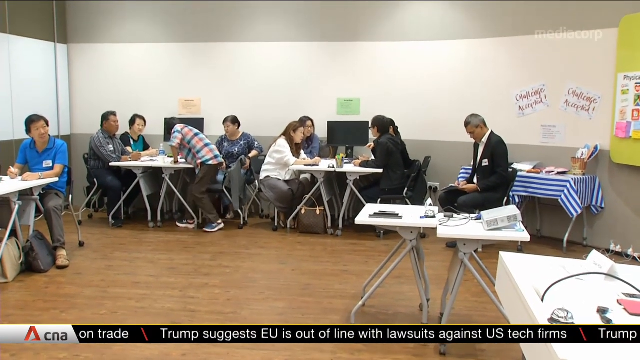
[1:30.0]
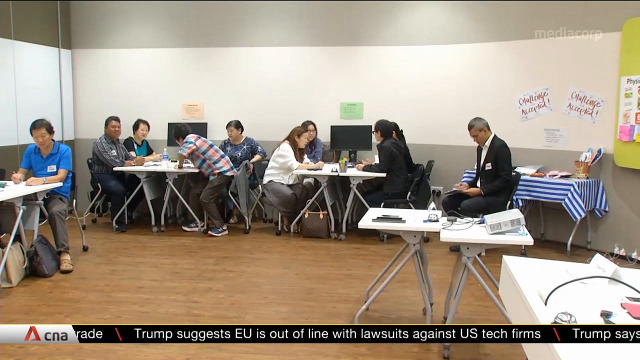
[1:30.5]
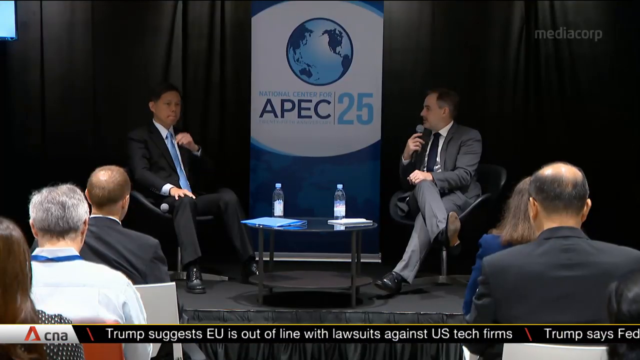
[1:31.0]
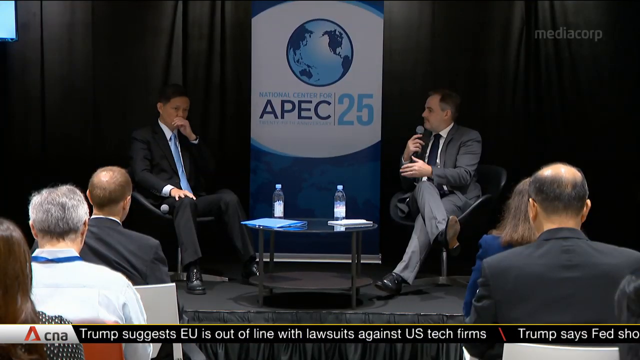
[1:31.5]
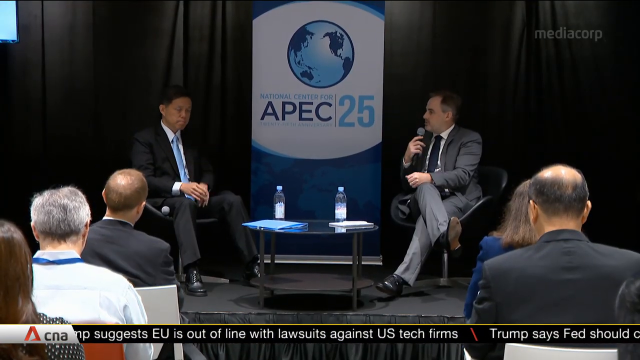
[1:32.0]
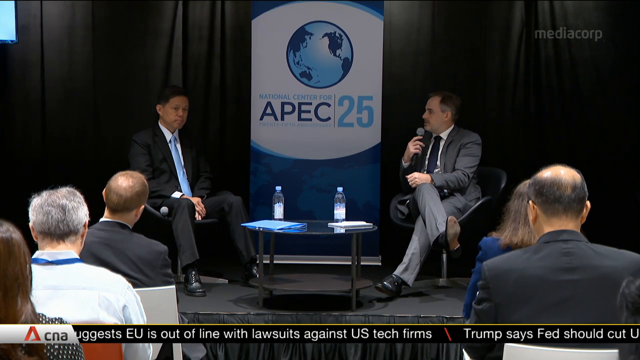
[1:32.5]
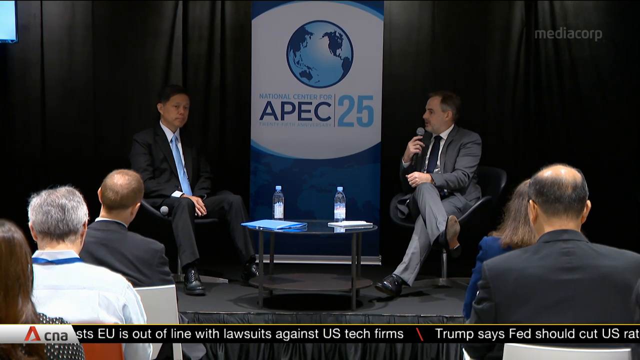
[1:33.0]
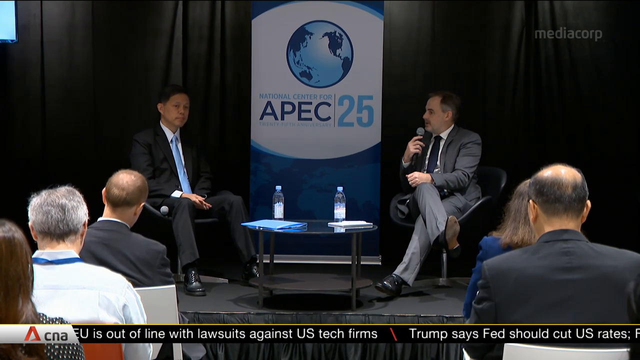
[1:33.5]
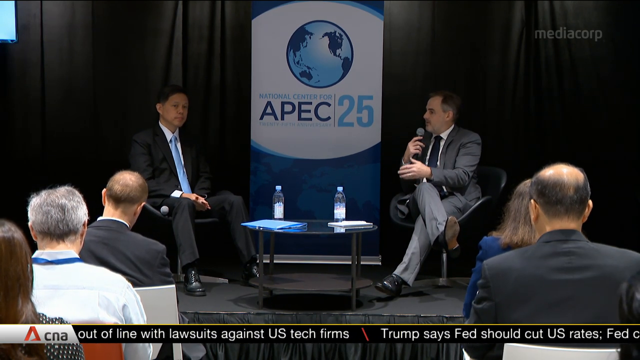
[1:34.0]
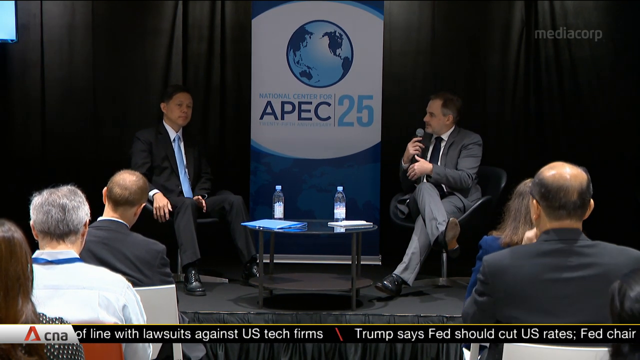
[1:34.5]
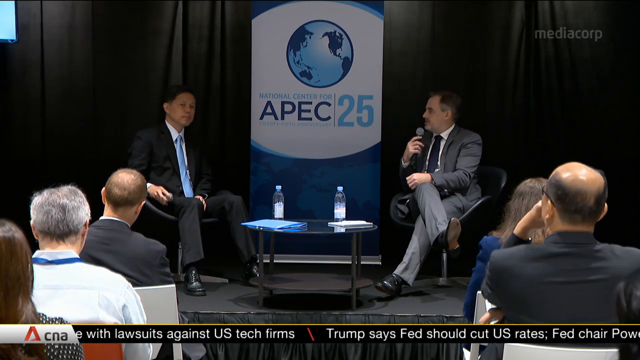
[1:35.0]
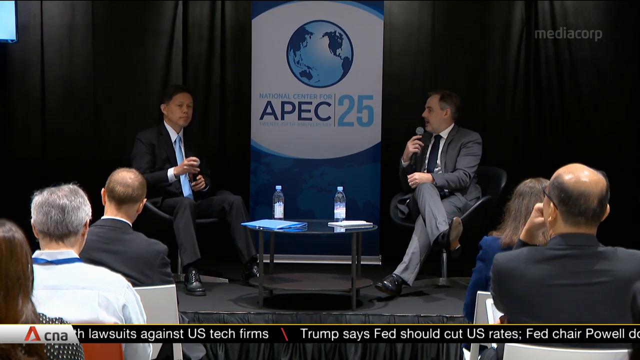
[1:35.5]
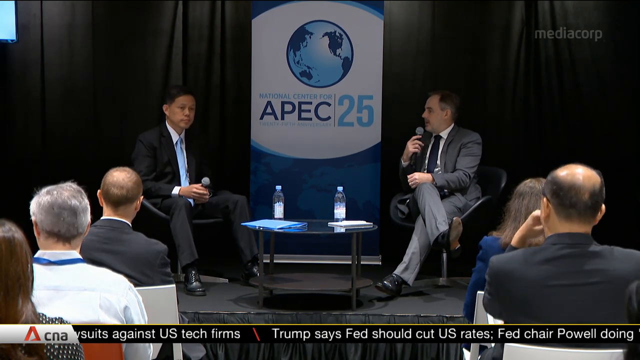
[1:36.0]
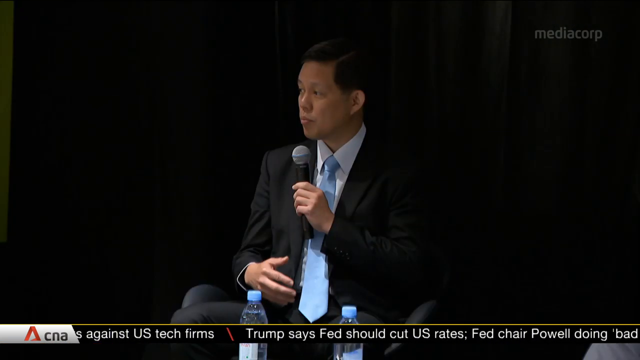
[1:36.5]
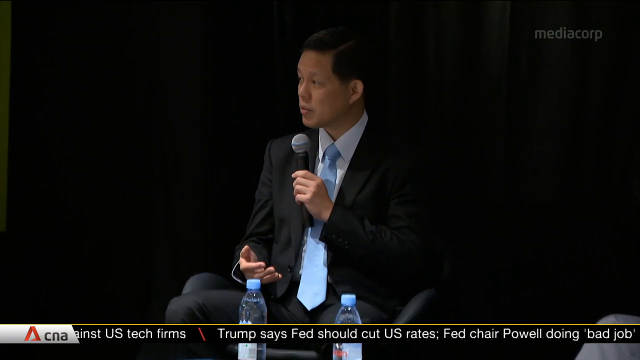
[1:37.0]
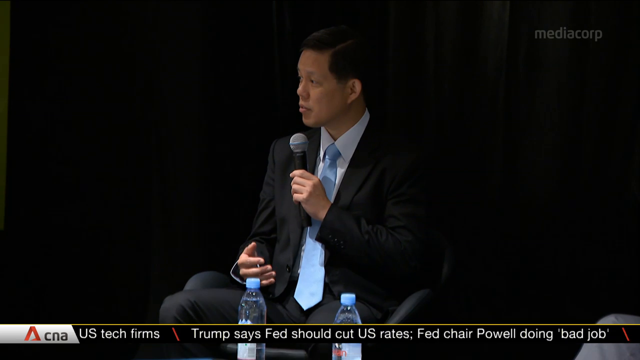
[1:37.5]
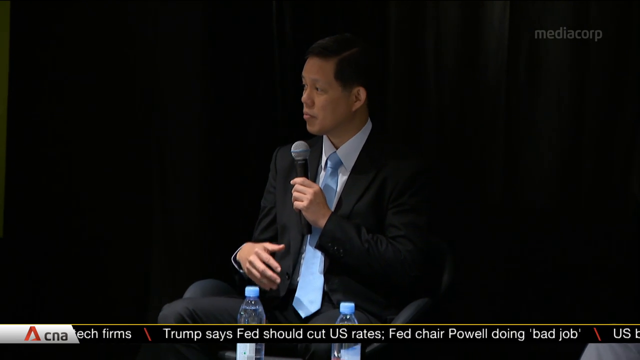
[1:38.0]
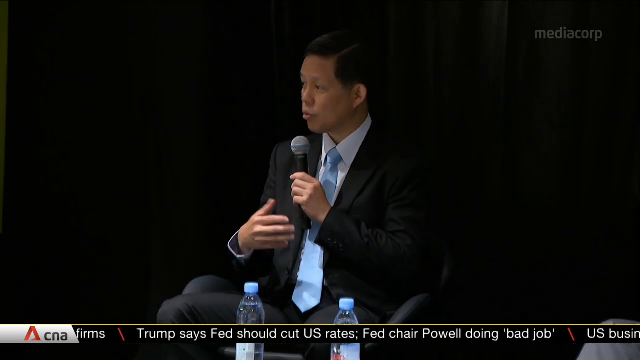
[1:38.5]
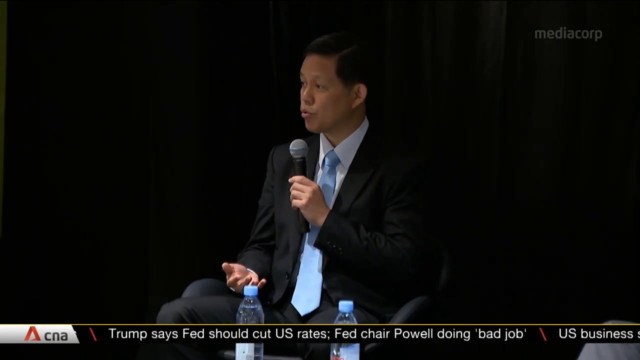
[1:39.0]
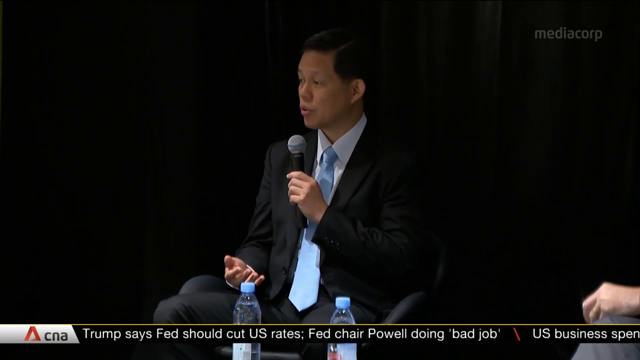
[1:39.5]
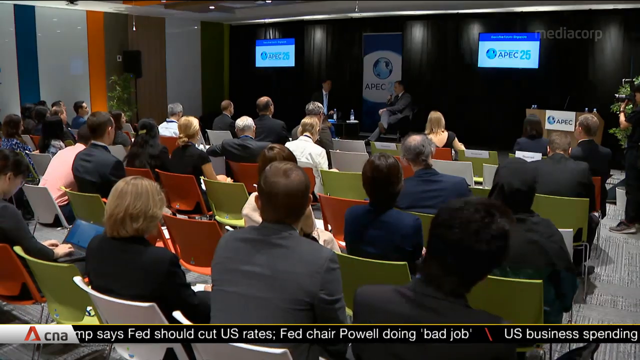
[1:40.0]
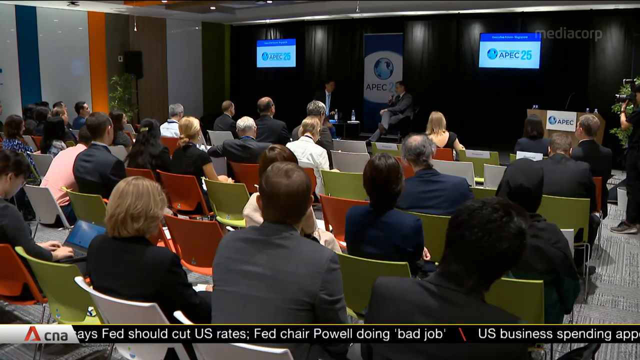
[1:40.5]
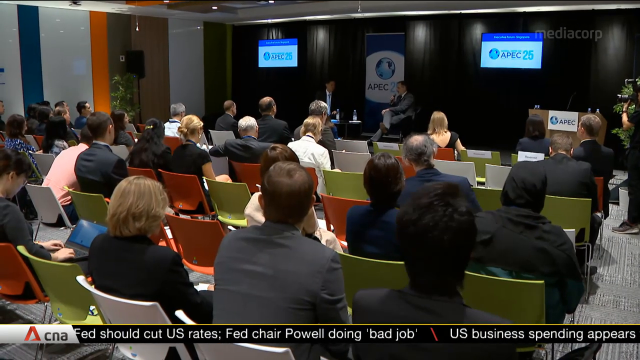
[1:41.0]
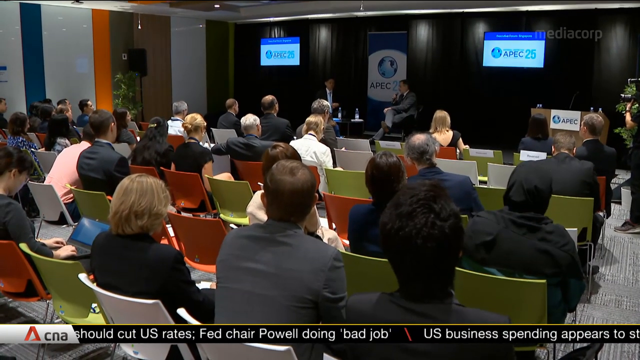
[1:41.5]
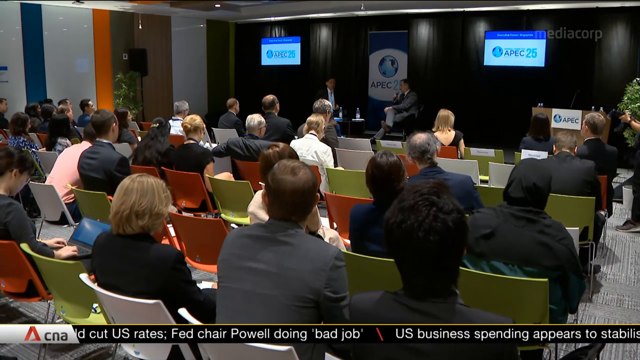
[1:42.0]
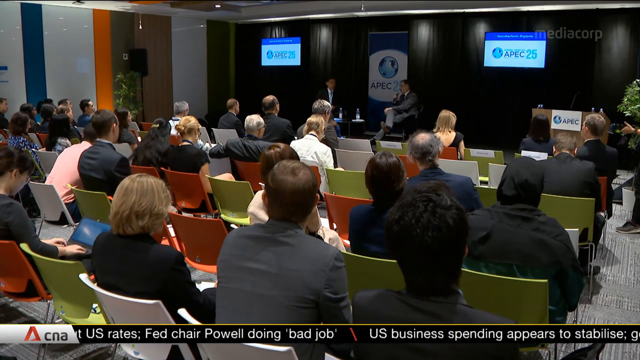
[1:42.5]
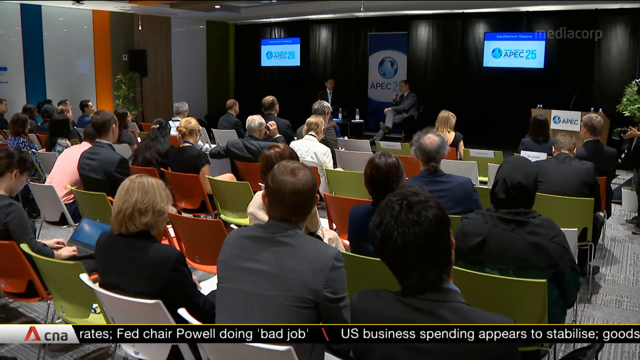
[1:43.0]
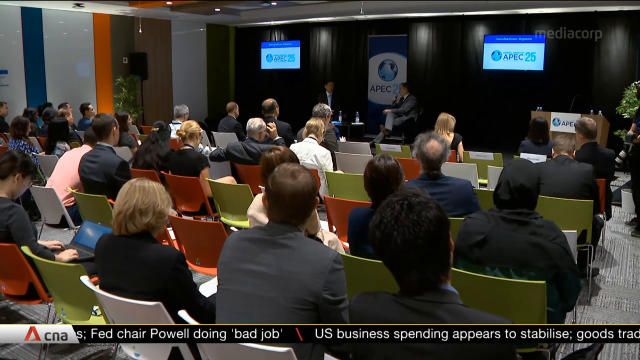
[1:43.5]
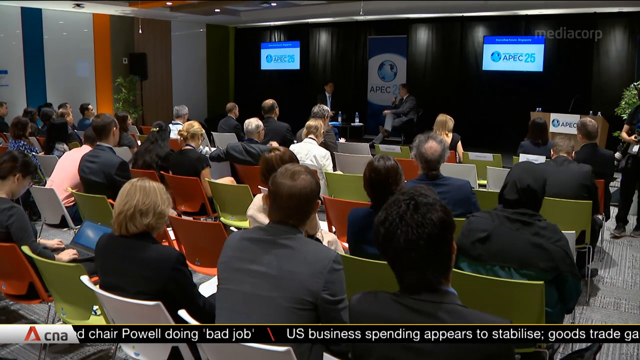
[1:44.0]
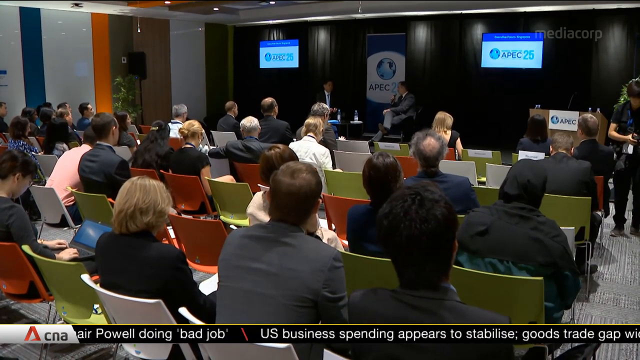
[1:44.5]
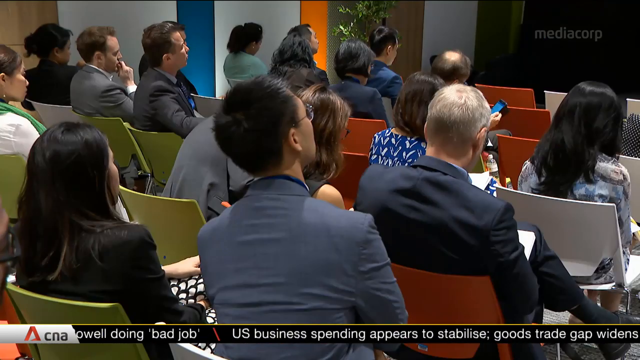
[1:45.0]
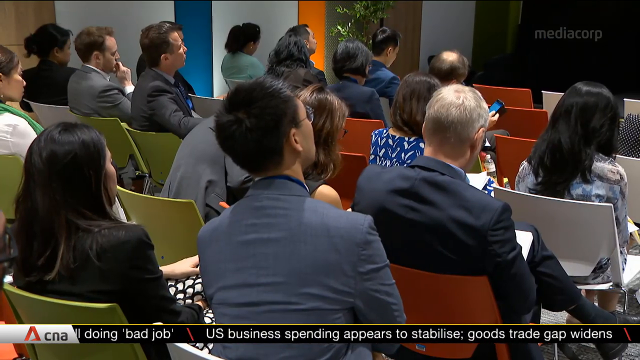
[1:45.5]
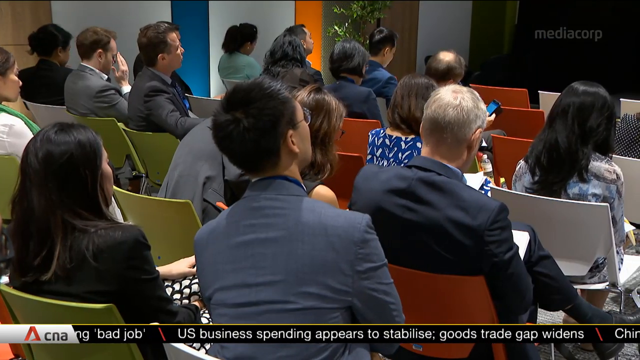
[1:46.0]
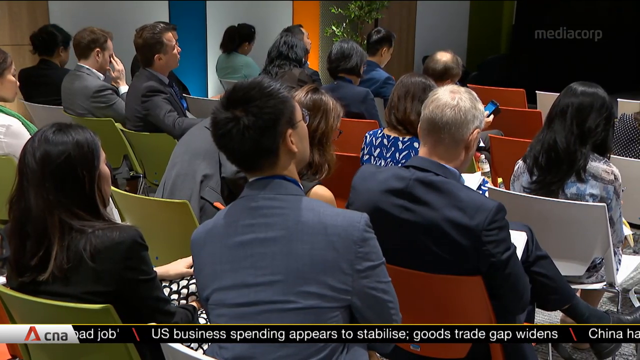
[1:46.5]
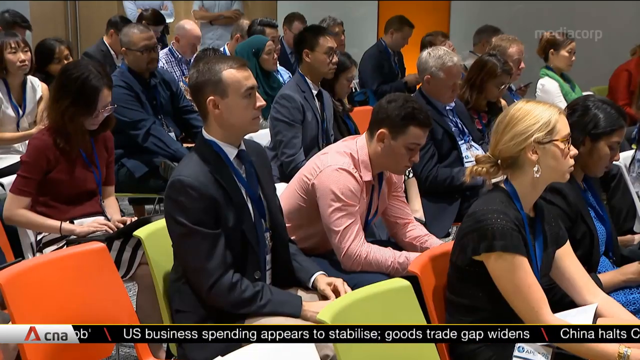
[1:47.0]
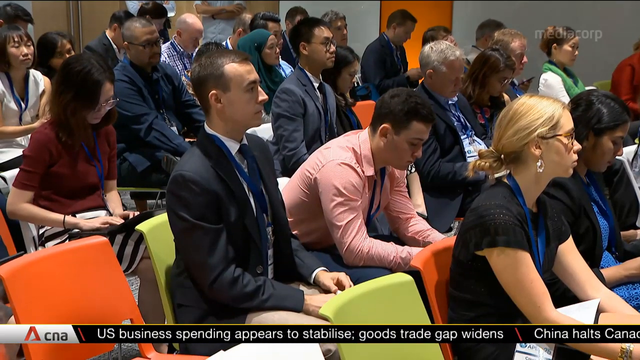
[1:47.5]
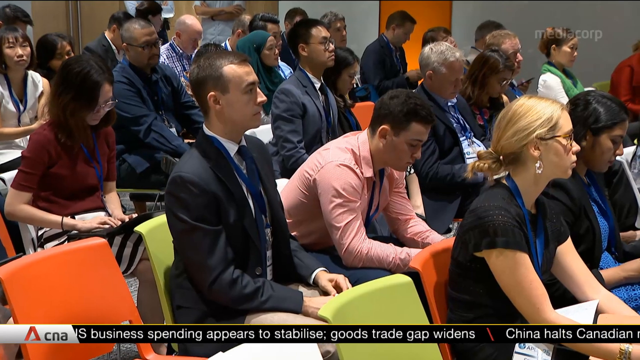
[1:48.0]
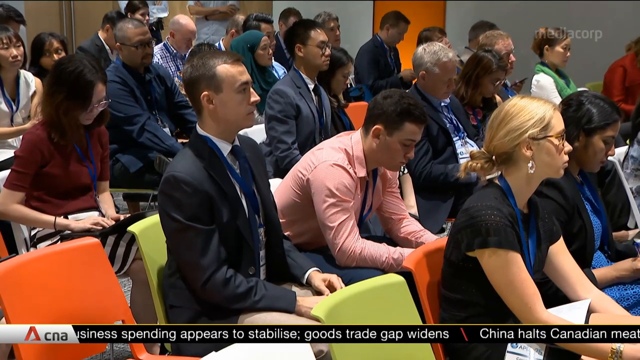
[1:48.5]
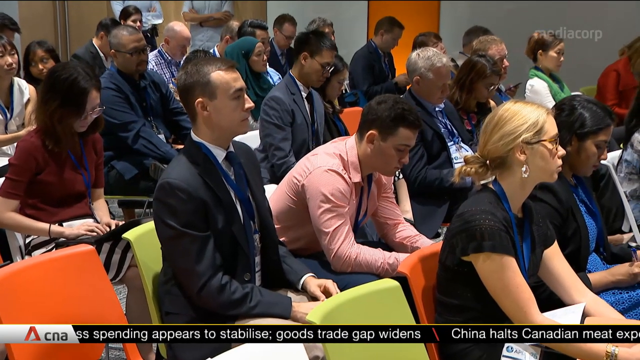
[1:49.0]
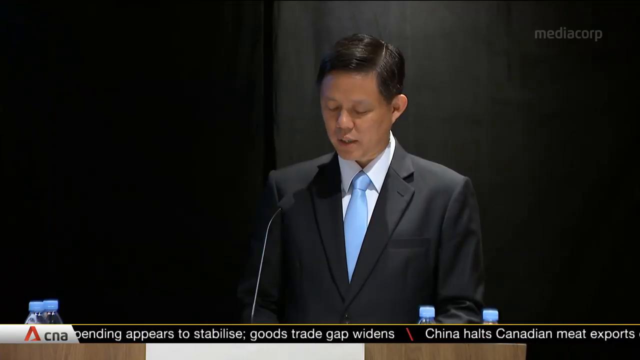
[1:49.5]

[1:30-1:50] The shot cuts to what appears to be another press conference. Two men sit on a stage with an APEC 25 logo between them; the logo has an image of the globe, with "APEC" written in dark blue and "25" in light blue. The man on the left of the logo appears to be of Chinese descent; he is the man seen earlier, wearing a navy suit, white shirt and pale blue tie. The man sitting to the right of the logo is a slightly older white man in a grey suit, white shirt and black tie. Four people are visible in the audience watching them, but there appear to be rows of journalists or employees watching the two men as they speak. The man on the right speaks into a microphone first, then the shot cuts to the man on the left speaking into a microphone and addressing the room. A wide shot follows, showing several journalists watching the men speak.